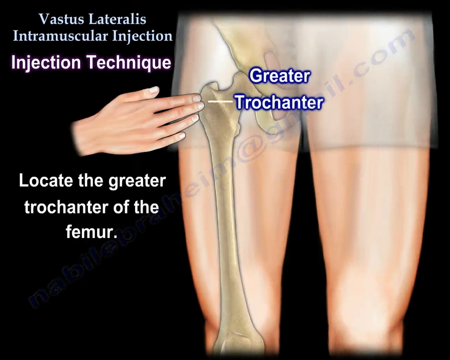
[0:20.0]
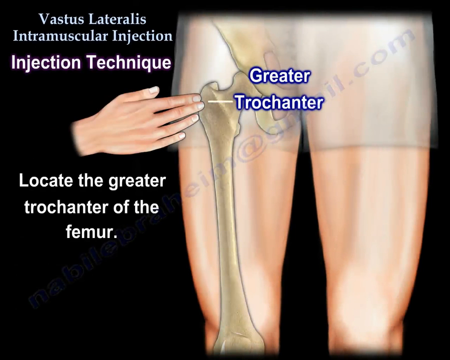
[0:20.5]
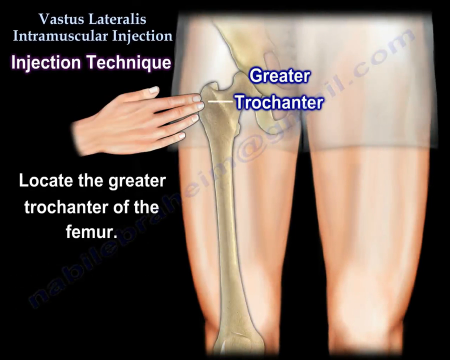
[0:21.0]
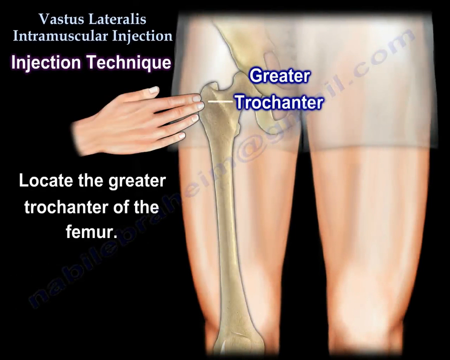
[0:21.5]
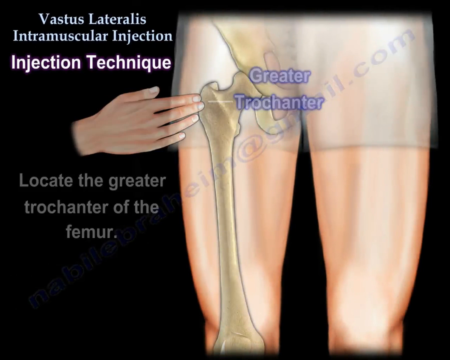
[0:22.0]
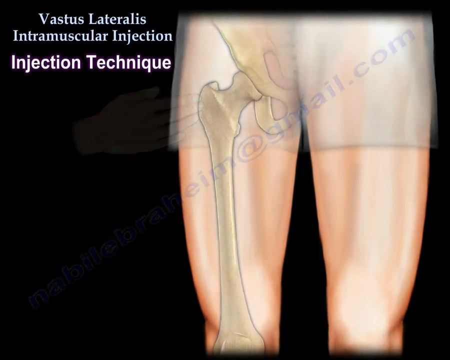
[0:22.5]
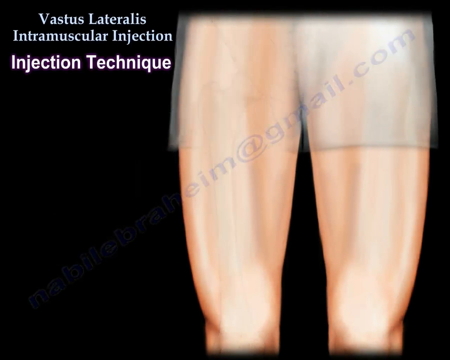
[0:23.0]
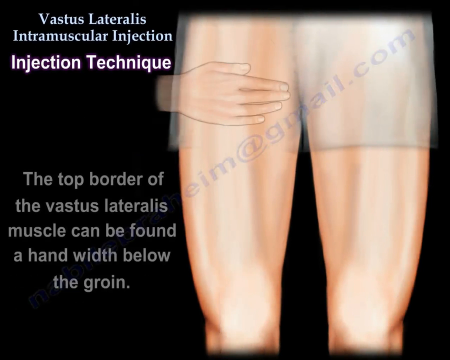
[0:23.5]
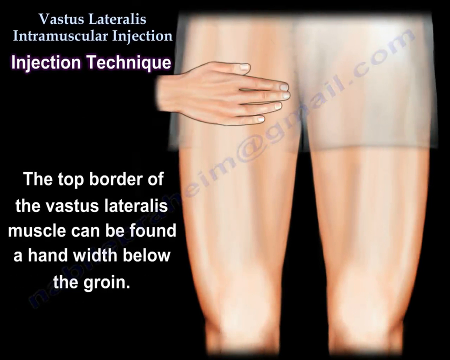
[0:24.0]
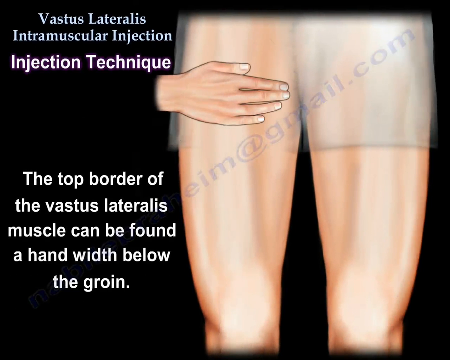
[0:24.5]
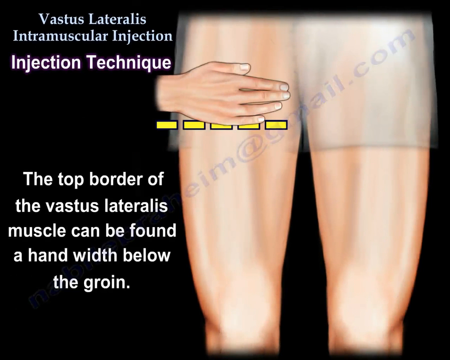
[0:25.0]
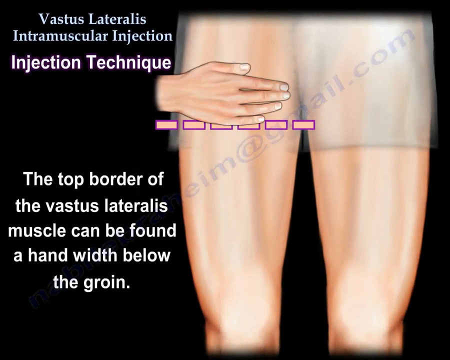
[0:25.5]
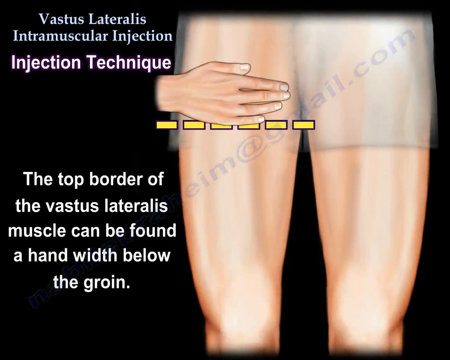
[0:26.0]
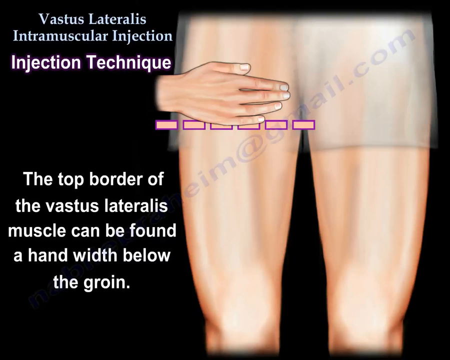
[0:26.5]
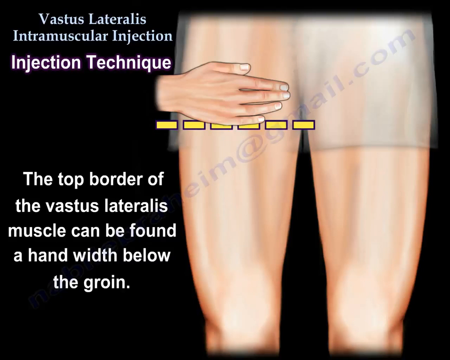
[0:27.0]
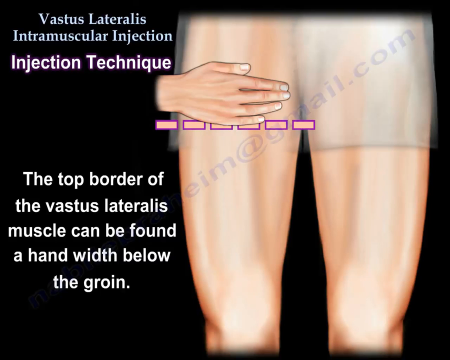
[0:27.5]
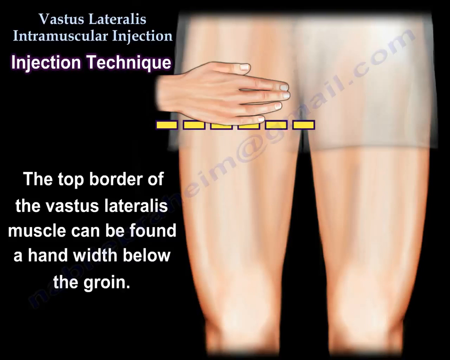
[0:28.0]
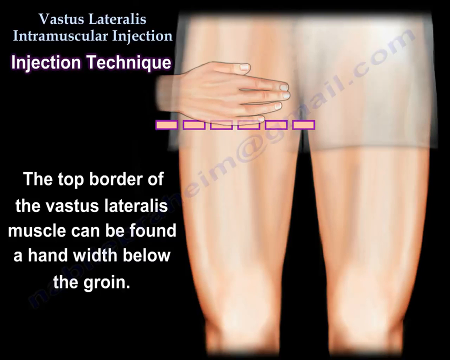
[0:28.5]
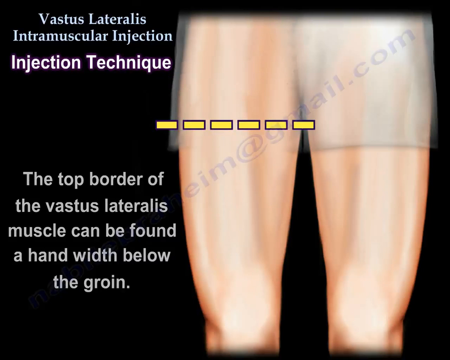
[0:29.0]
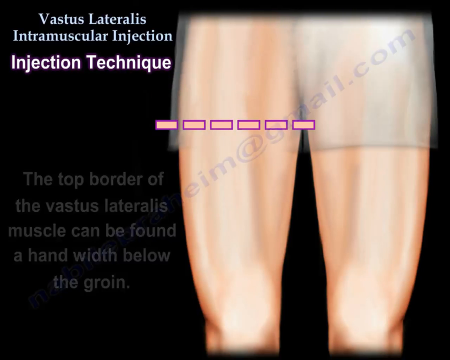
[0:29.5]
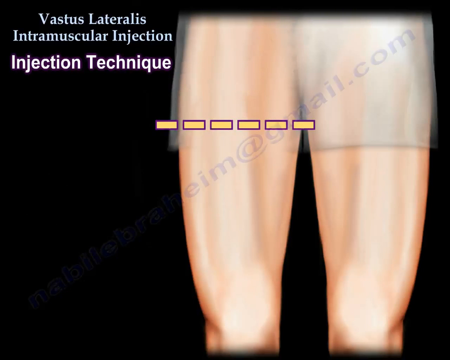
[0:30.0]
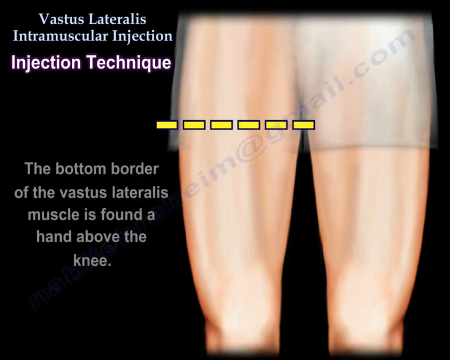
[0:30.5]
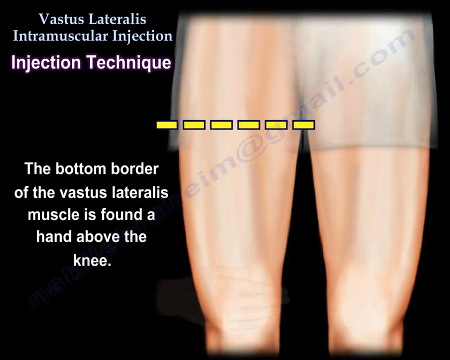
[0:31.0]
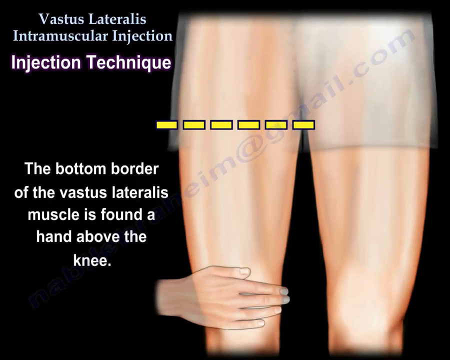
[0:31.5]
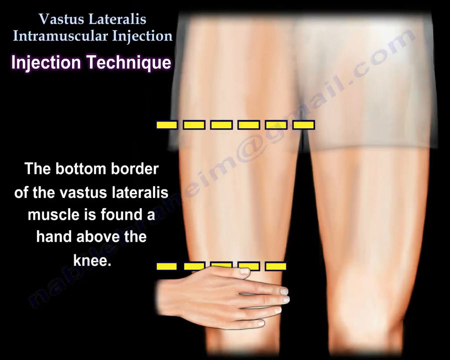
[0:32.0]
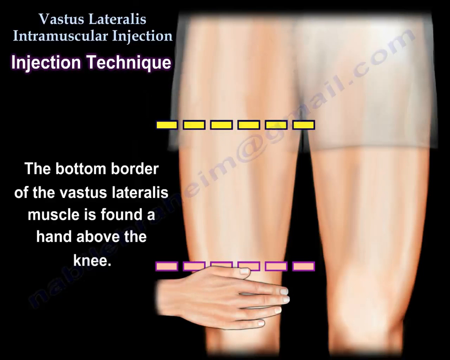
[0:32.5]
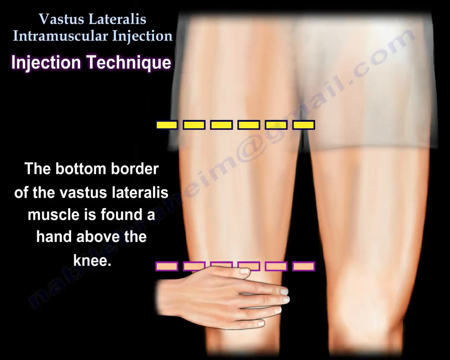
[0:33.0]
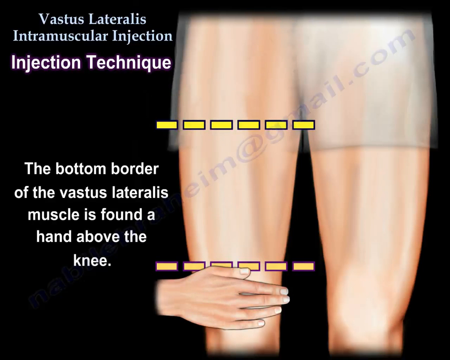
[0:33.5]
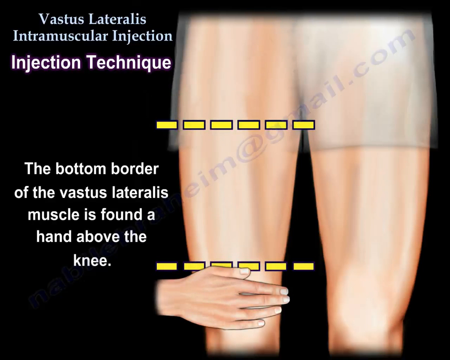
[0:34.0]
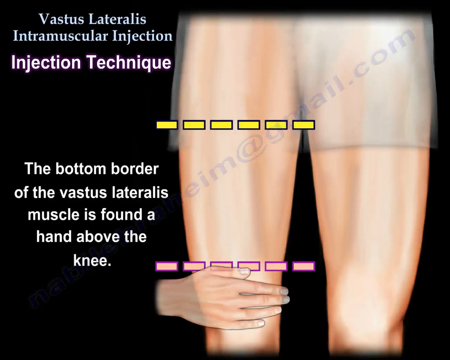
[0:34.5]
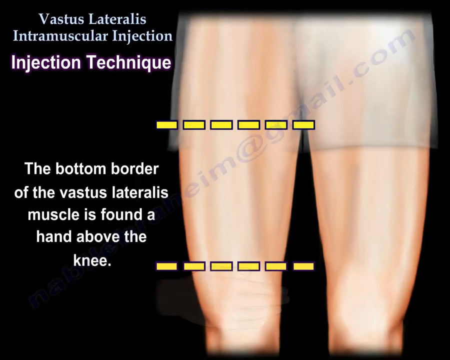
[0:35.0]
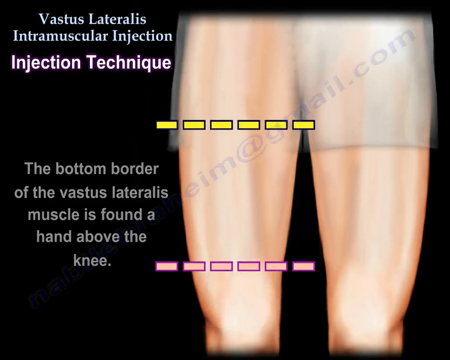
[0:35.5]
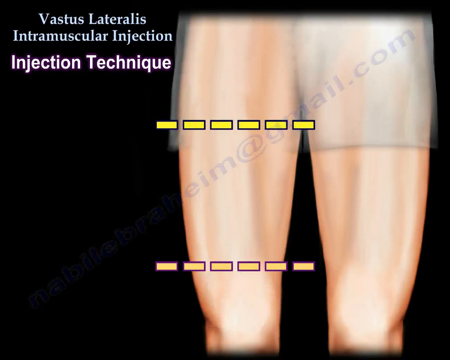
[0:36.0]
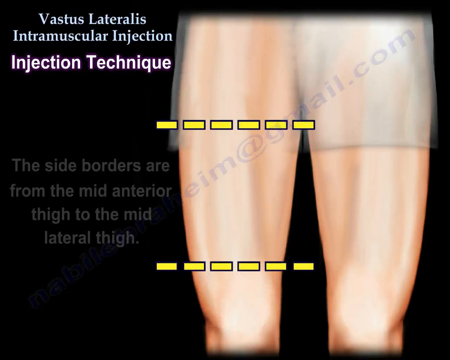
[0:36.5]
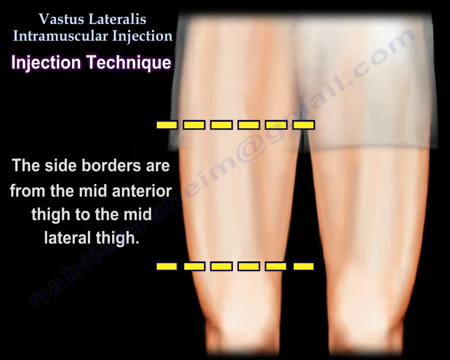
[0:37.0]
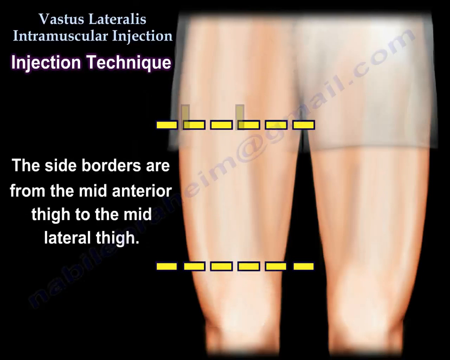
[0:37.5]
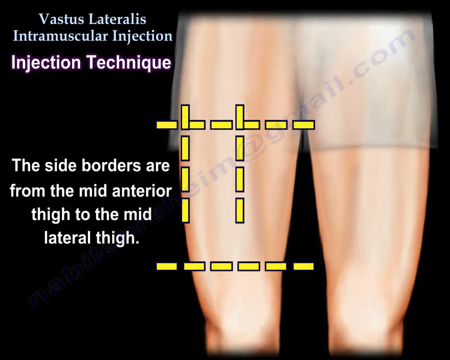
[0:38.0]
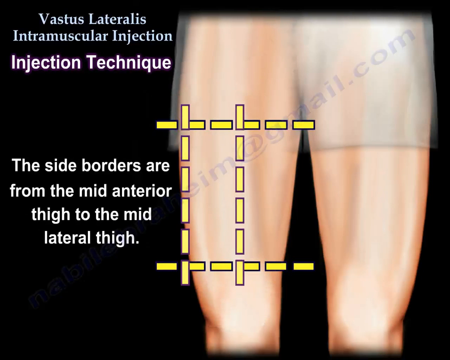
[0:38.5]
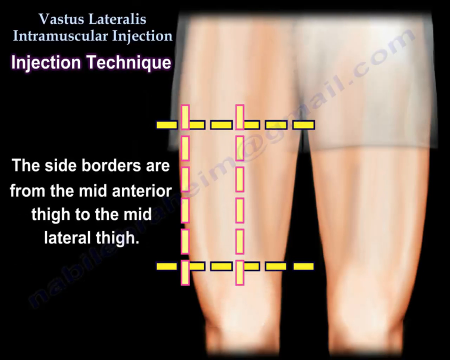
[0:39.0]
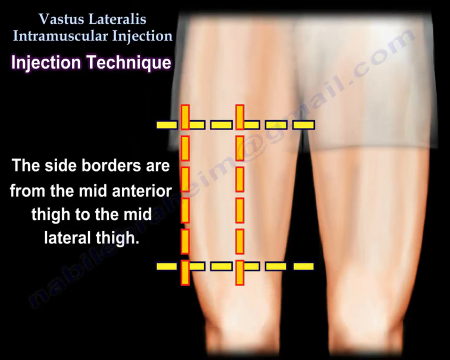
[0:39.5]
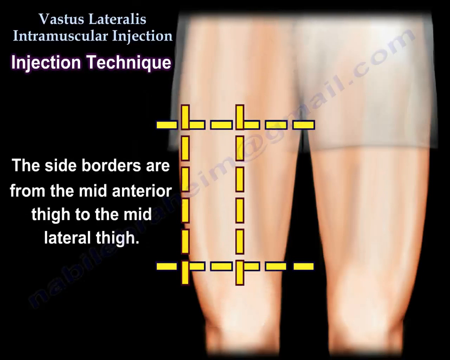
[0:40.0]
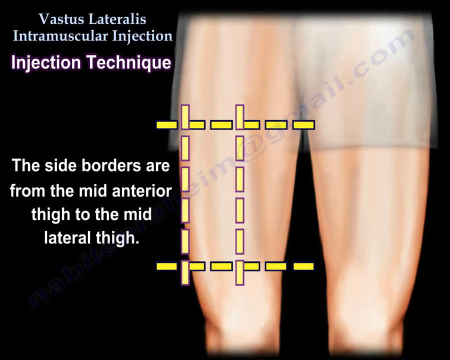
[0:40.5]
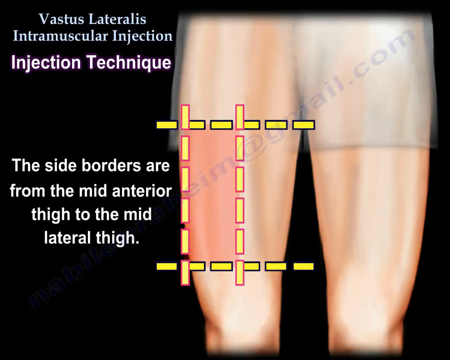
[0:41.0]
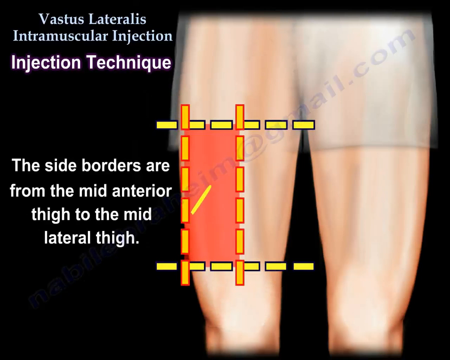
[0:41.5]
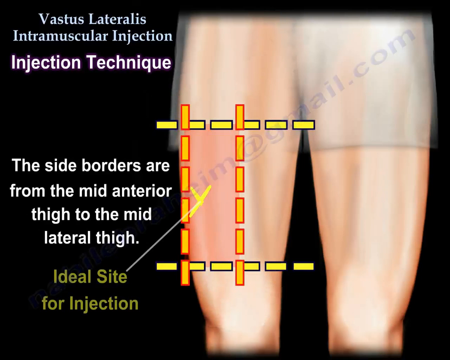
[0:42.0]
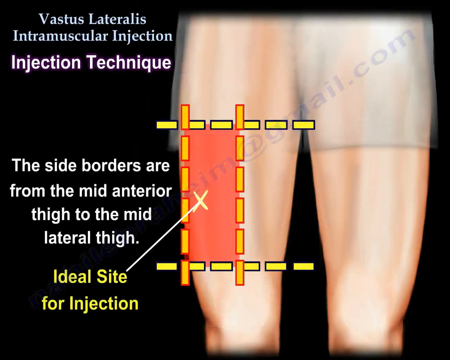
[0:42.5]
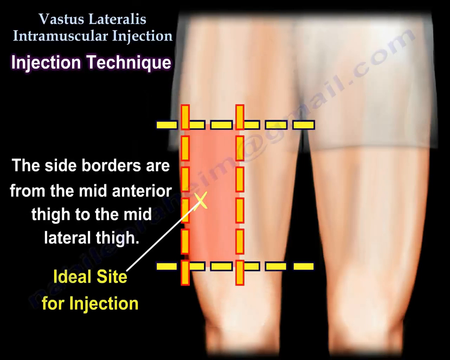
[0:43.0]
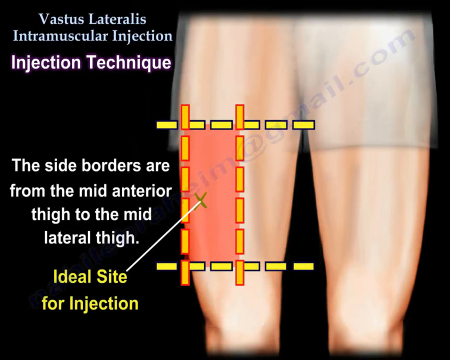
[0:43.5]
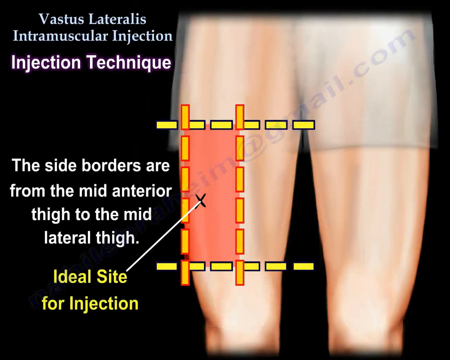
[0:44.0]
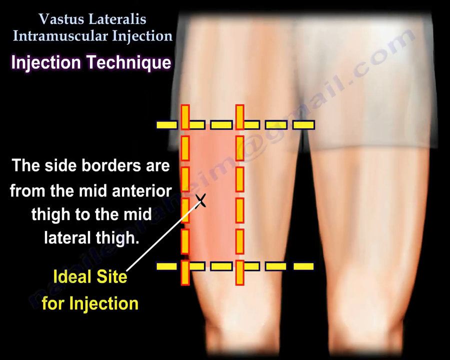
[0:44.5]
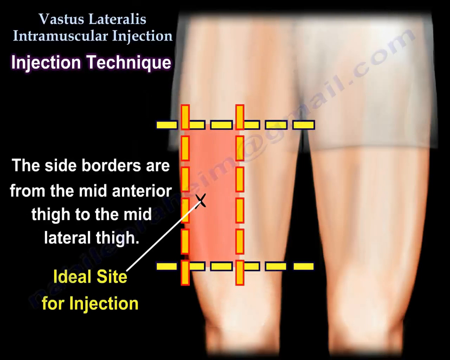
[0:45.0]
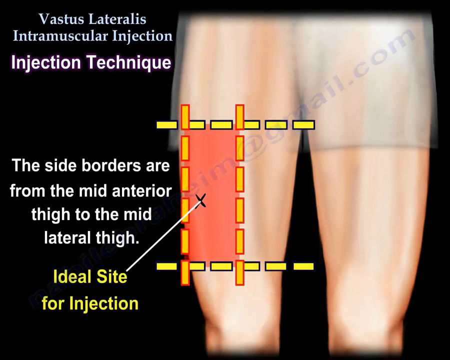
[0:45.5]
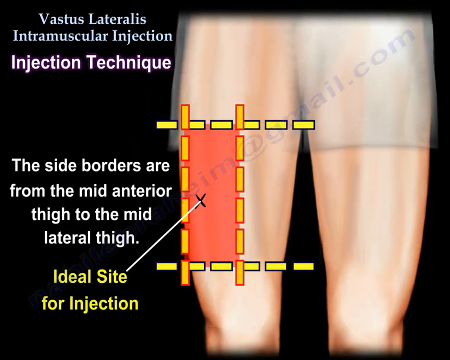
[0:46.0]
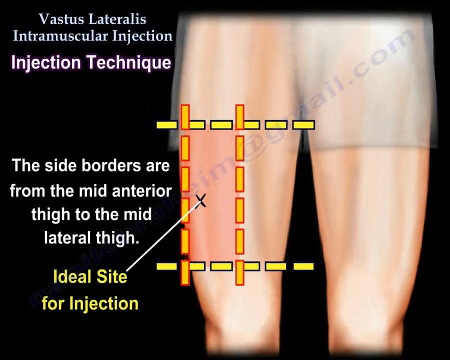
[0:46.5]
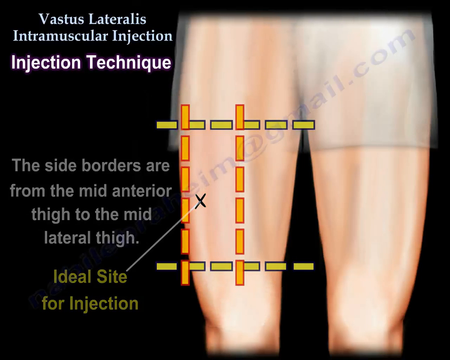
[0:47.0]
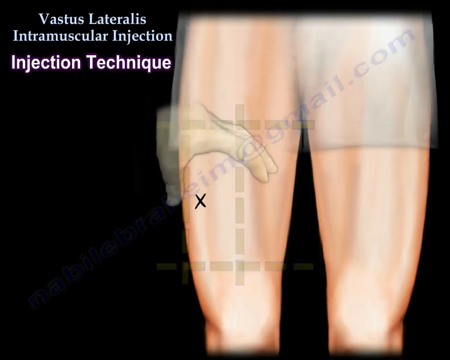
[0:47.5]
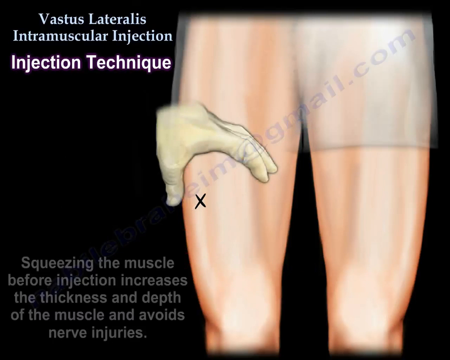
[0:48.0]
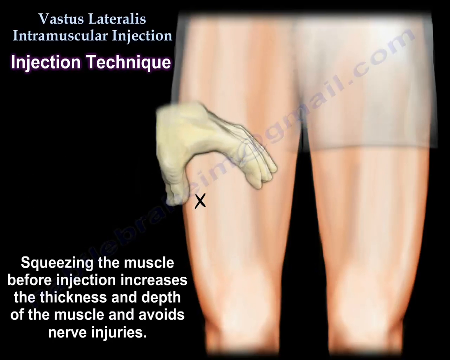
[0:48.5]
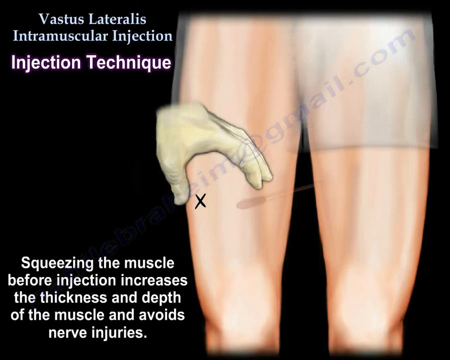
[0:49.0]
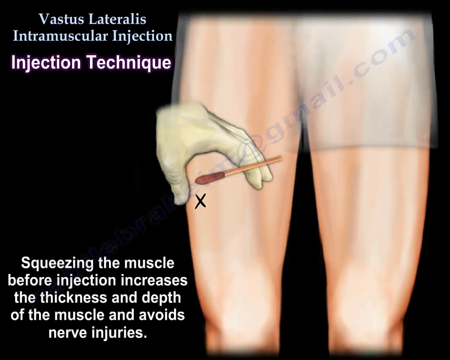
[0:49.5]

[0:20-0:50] The presentation continues with the femur inside the human body, with an outline of the body on top of it. The top left corner still reads "vastus lateralis intramuscular injection", and underneath it reads "injection technique". What looks to be a white hand touches the top of the femur. A line with an arrow is labeled "greater truncinator", and beneath it text reads "locate the greater truncinator of the femur". The hand then moves right above where it was before, and a dashed line appears under the pinky finger of the hand. Instructions in the bottom left corner begin "the top border of the vastus lateralis muscle can be found". The hand disappears and goes down to the knee, followed by text reading "the bottom border of the vastus lateralis muscle is found by hand above the knee".